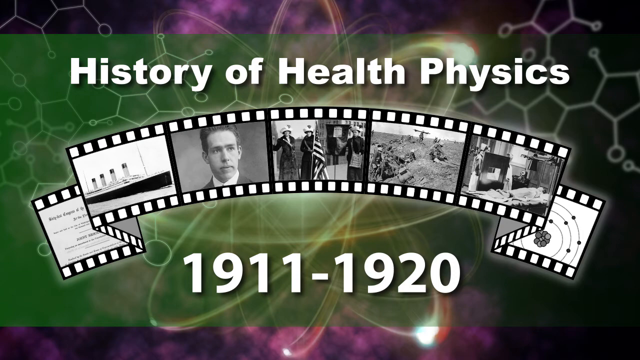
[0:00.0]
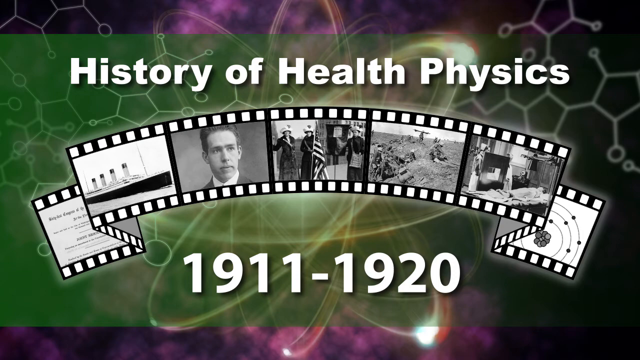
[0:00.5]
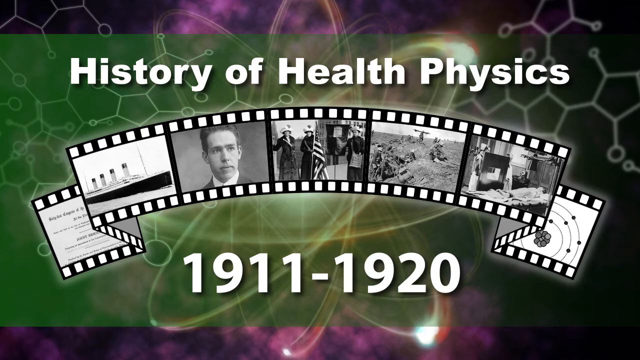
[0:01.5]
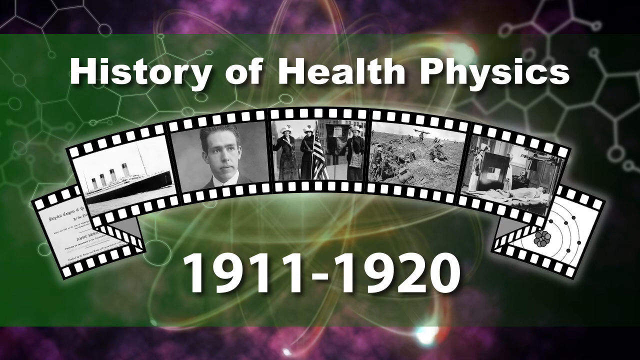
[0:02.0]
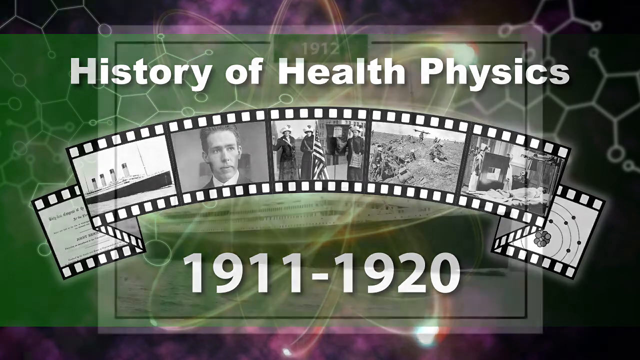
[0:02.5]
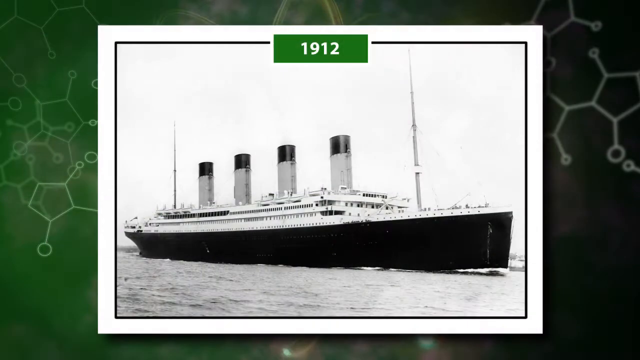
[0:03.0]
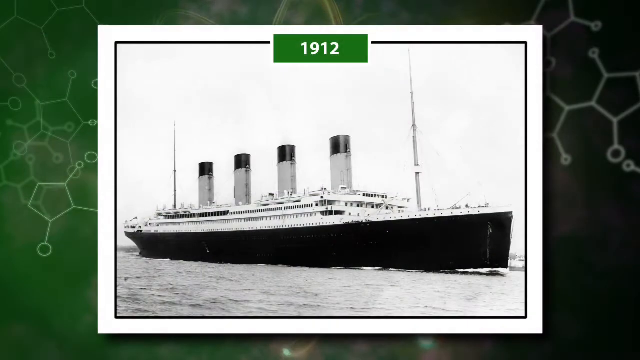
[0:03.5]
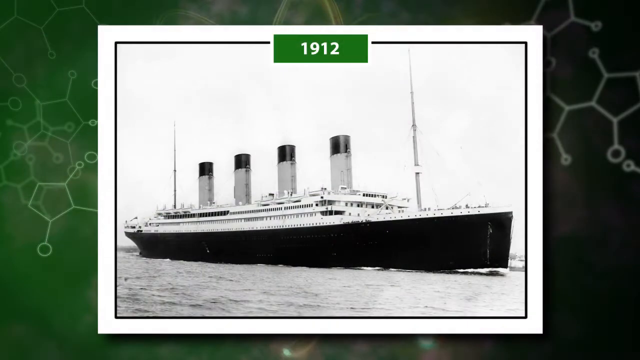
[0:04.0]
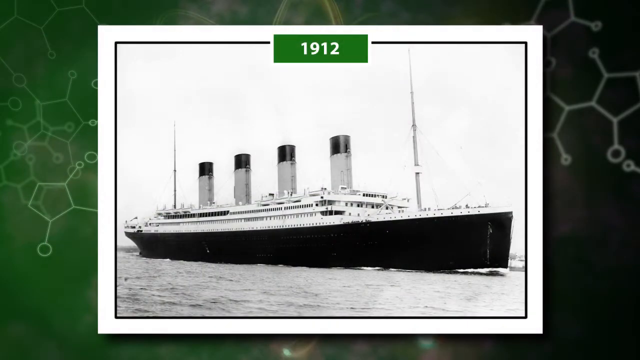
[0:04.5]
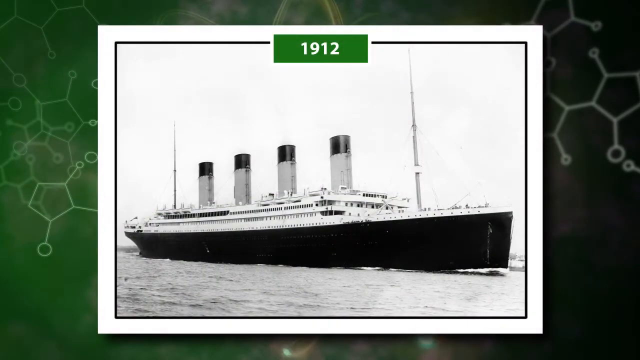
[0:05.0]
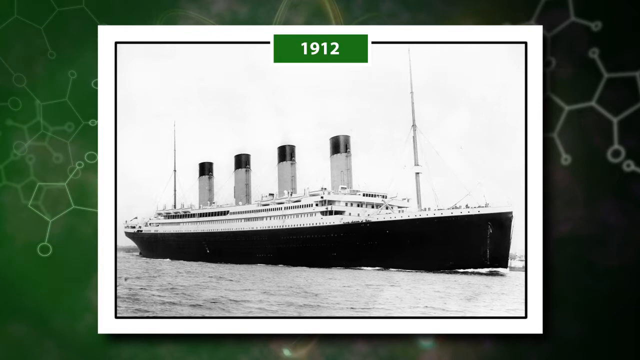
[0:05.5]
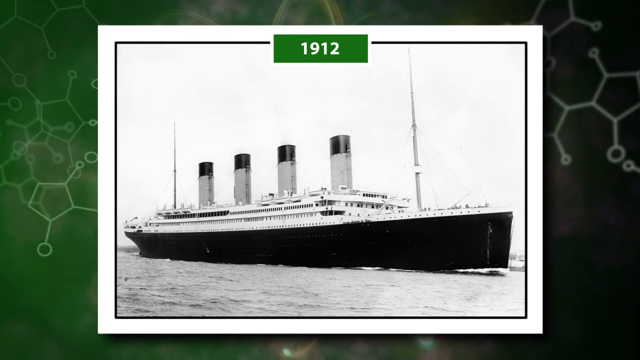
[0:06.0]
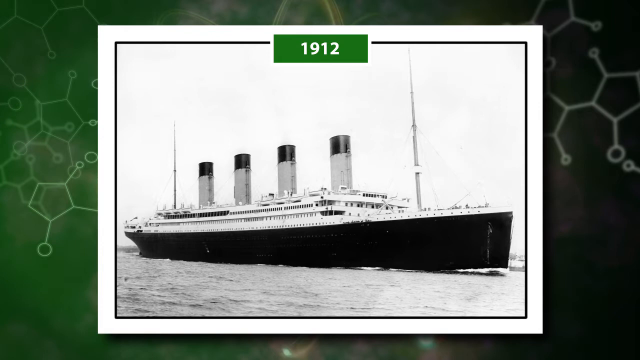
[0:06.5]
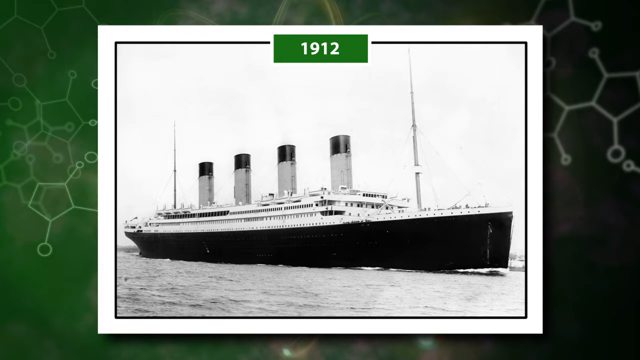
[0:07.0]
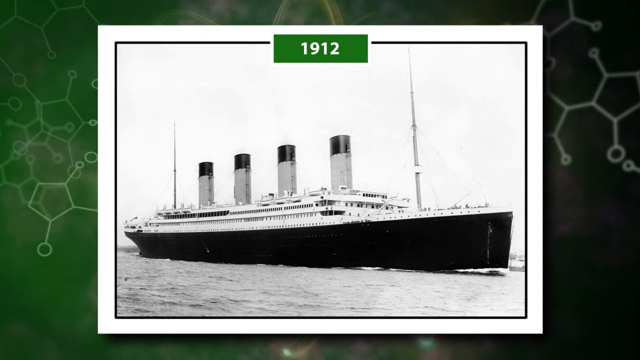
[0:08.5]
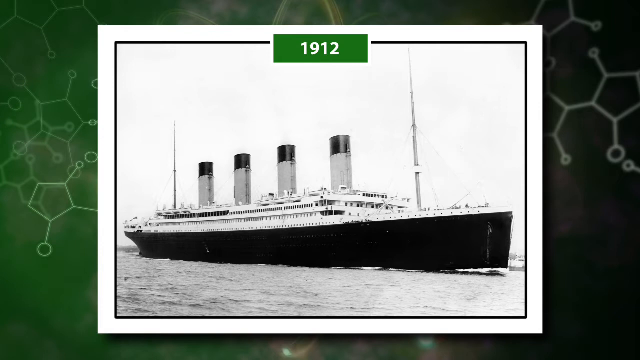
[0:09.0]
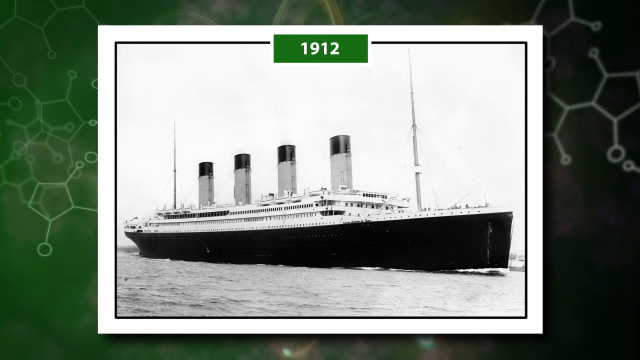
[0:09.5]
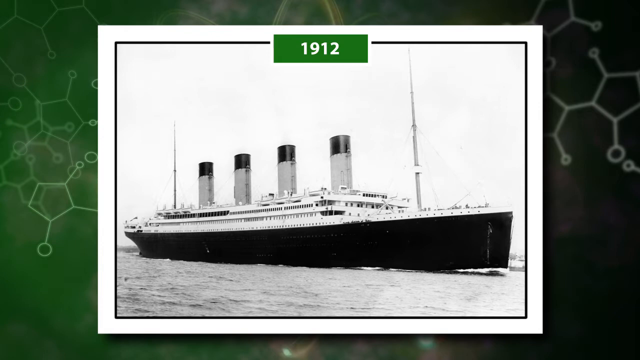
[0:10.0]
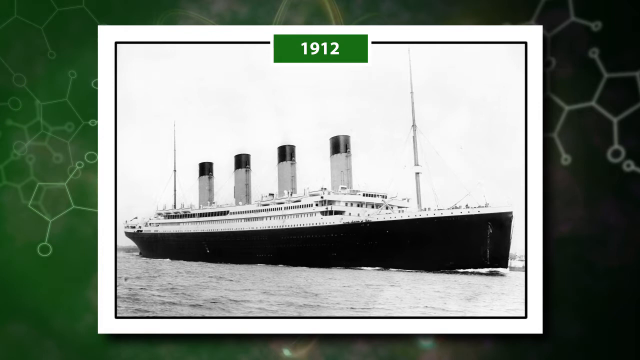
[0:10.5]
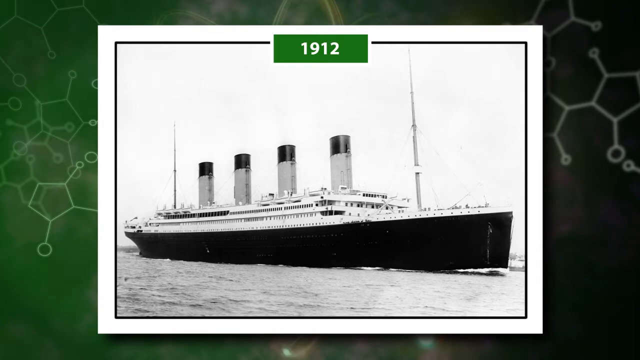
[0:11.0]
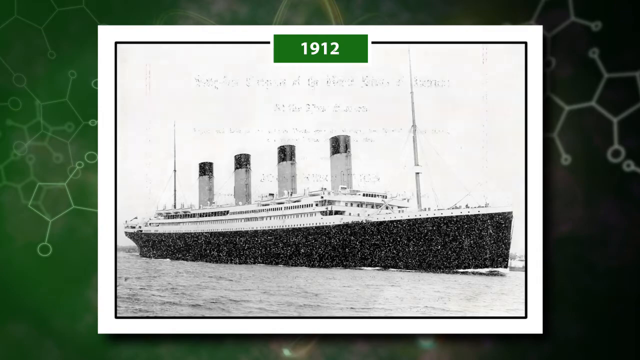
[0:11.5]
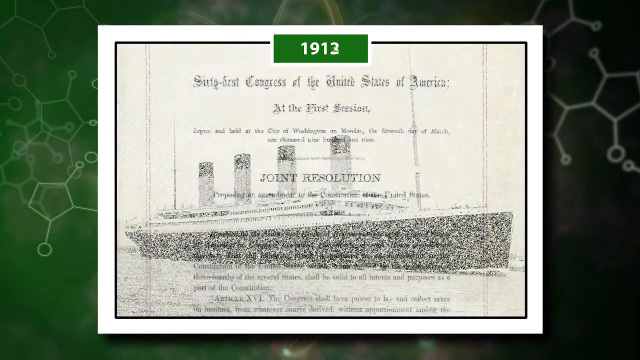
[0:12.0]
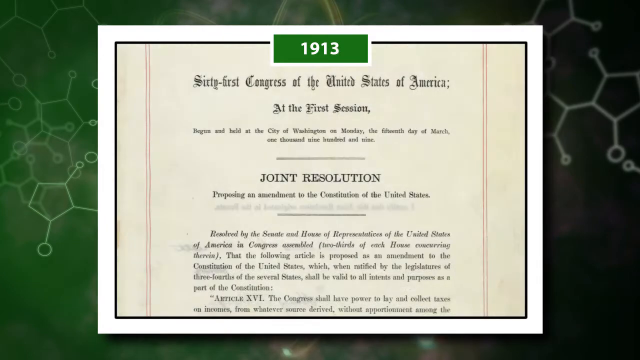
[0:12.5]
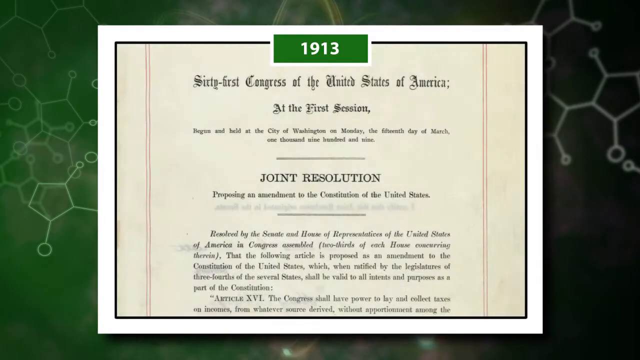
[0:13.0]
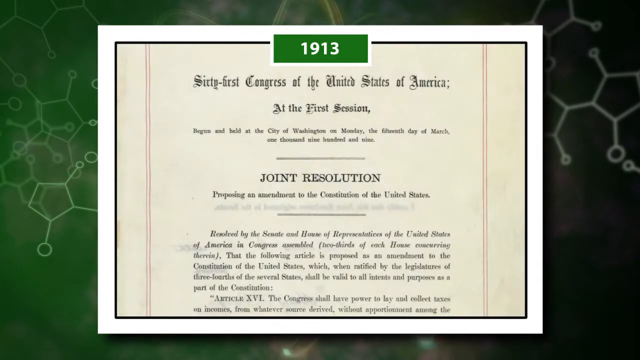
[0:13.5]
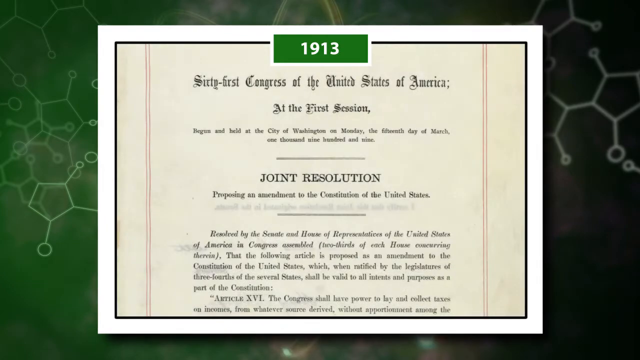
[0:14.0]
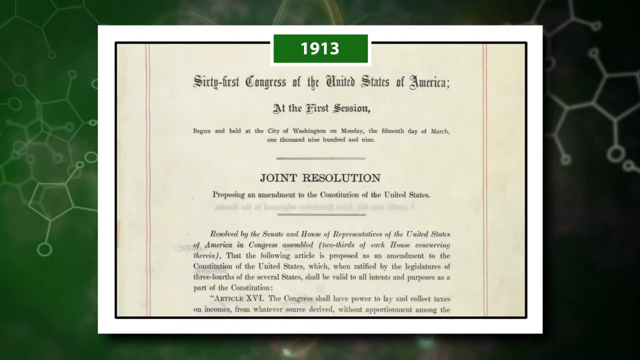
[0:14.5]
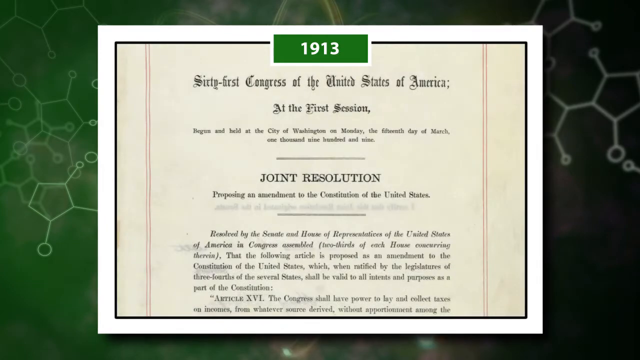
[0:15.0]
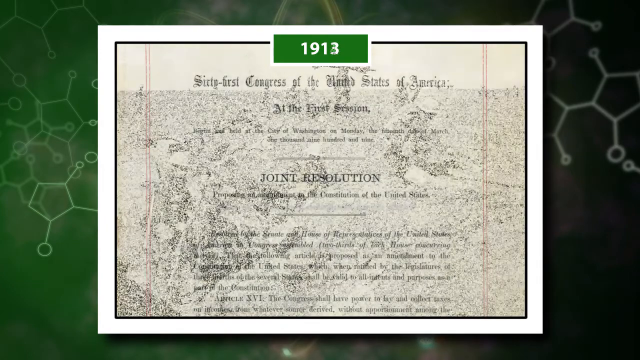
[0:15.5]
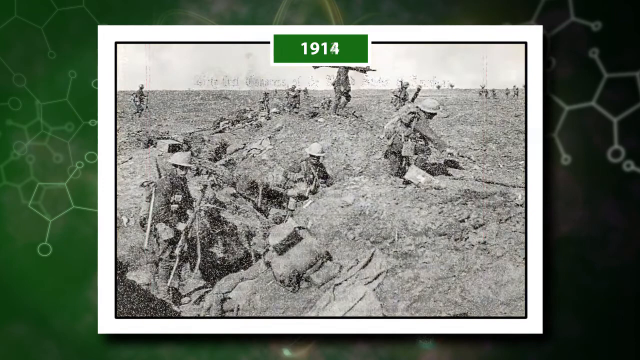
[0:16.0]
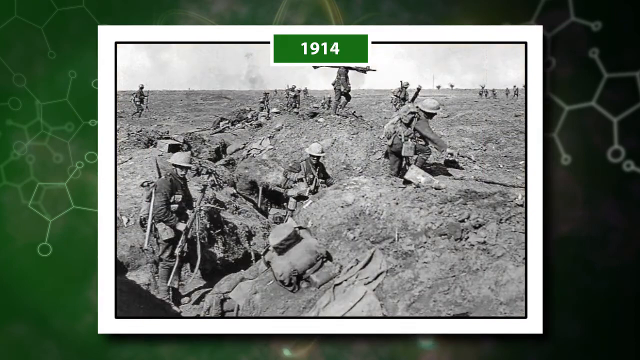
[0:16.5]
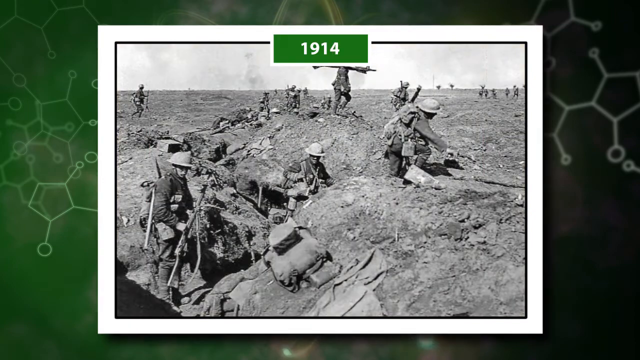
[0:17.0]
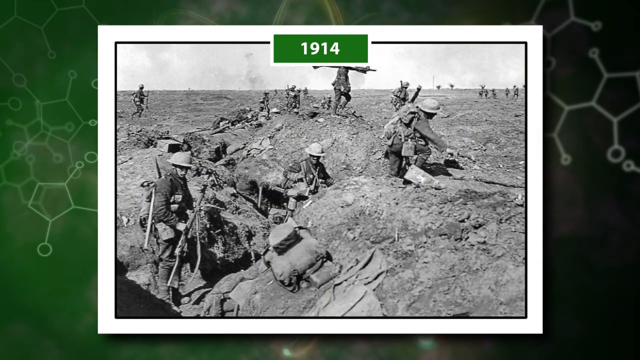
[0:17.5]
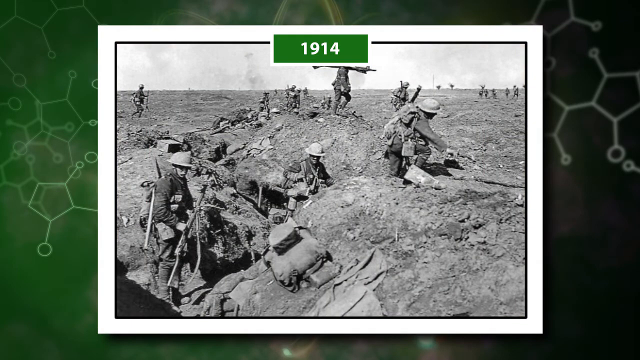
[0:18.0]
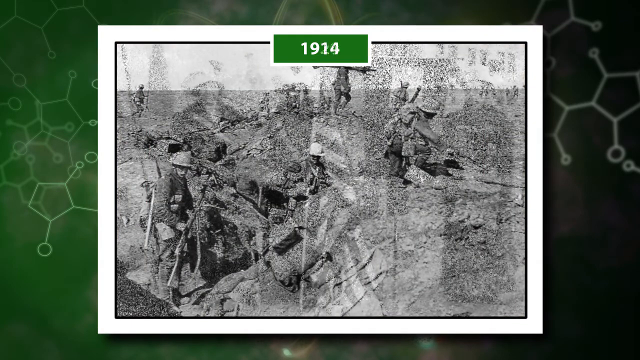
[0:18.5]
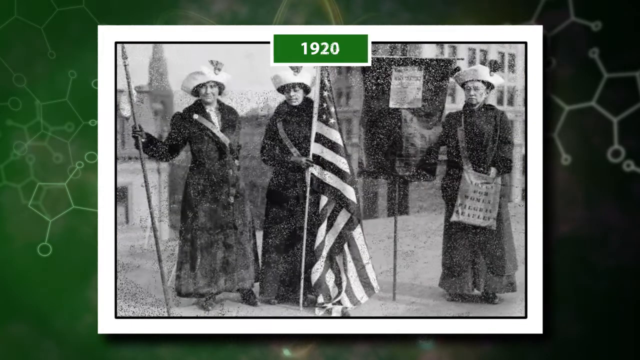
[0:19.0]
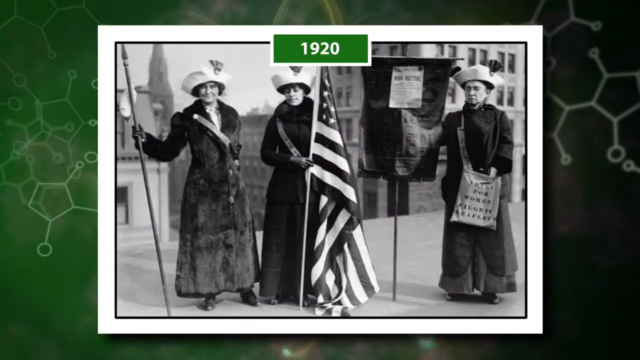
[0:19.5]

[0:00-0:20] The video opens on a purplish background that turns greenish toward the top, with white text reading "history of health physics." The images are framed to mimic a roll of film. A black-and-white image shows a ship, the Titanic, black at the bottom and white at the top, with what look like four big chimneys. Text at the bottom reads 1911 through 1920, and then "1912" appears. Images of people follow. Next is a joint resolution, a piece of paperwork whose words cannot be read clearly. Another image shows four women, seemingly at the capitol, holding up signs in what appears to be a women's suffrage protest. Another image shows a war.